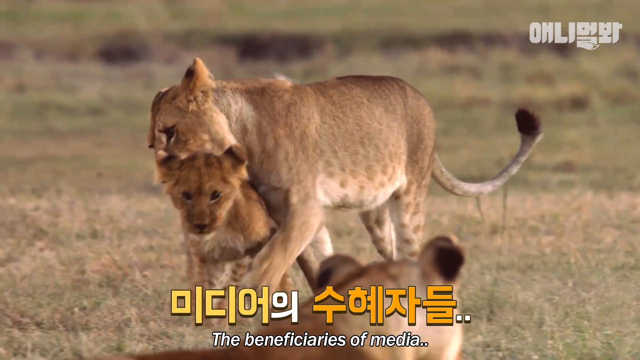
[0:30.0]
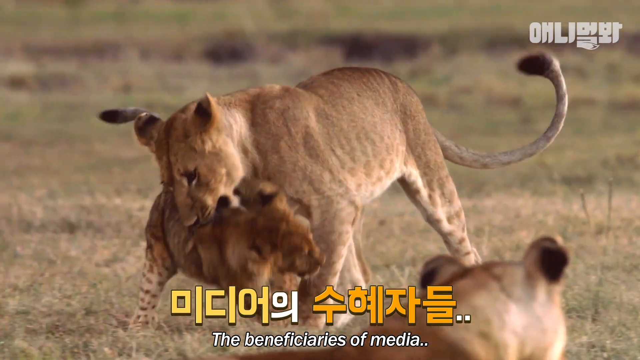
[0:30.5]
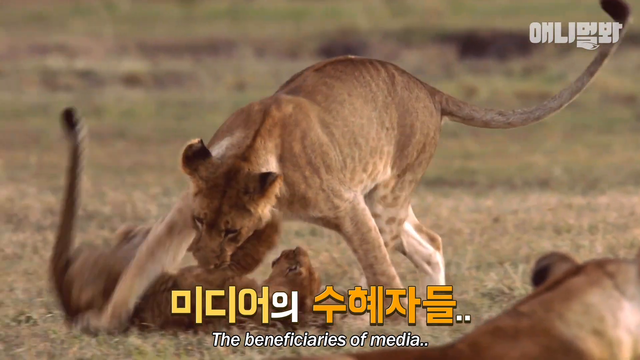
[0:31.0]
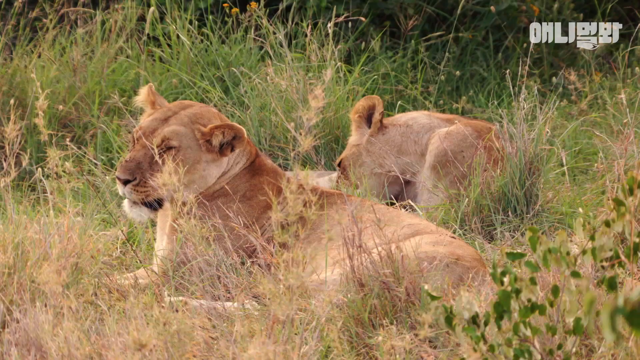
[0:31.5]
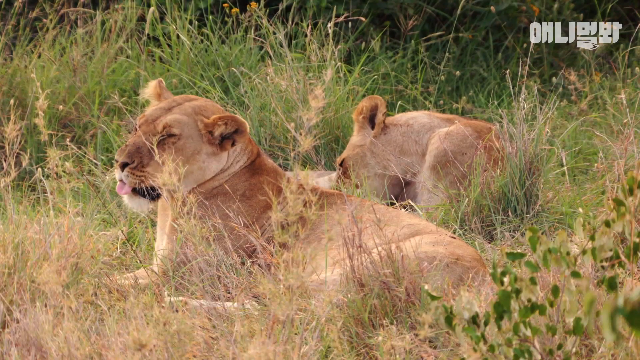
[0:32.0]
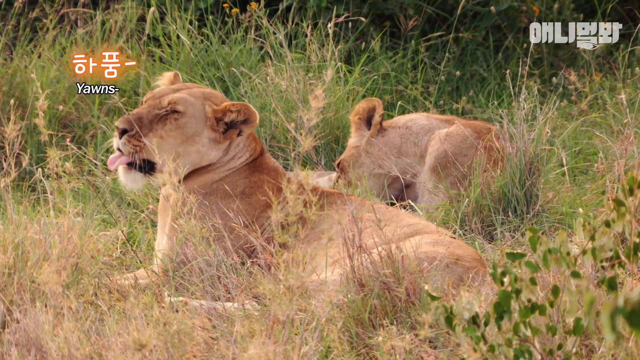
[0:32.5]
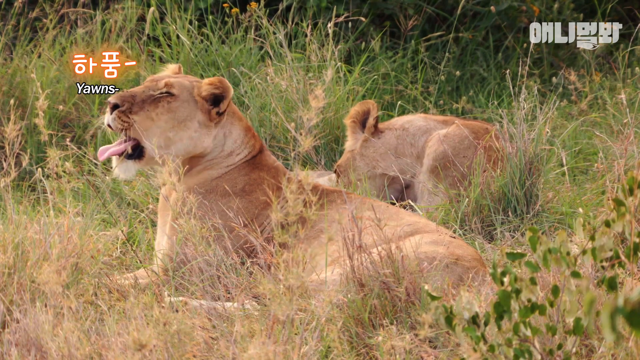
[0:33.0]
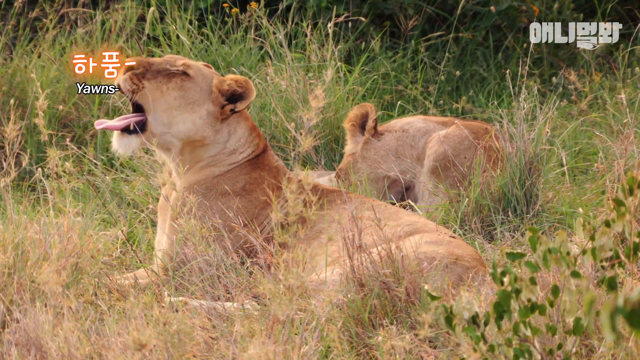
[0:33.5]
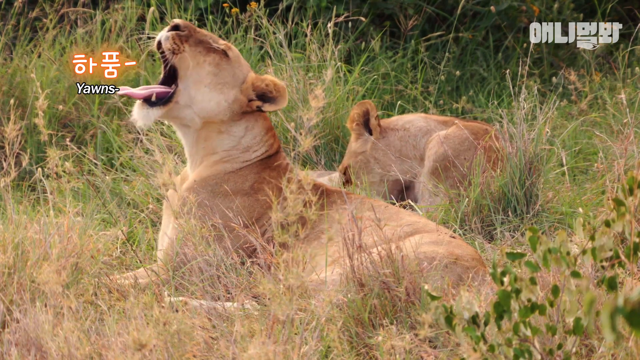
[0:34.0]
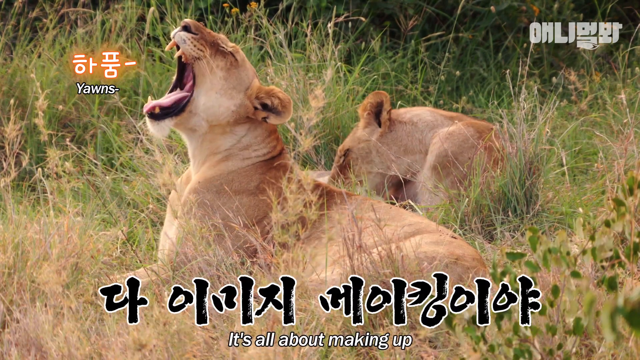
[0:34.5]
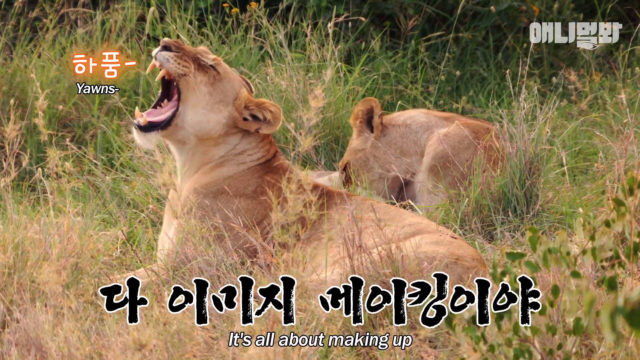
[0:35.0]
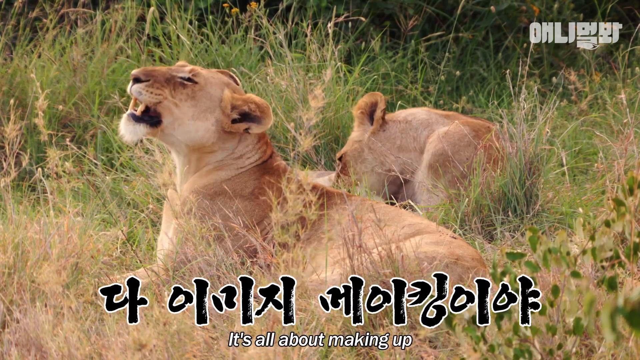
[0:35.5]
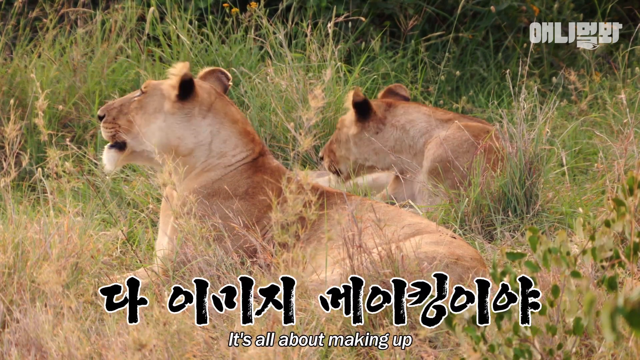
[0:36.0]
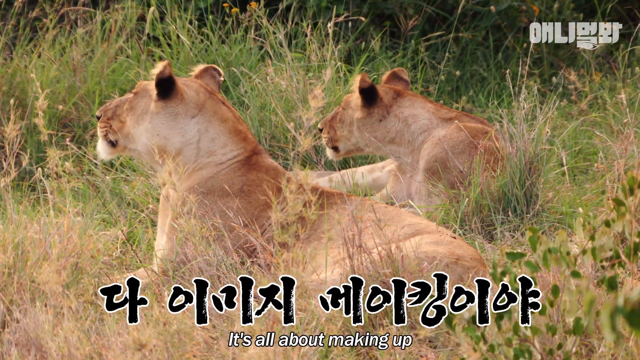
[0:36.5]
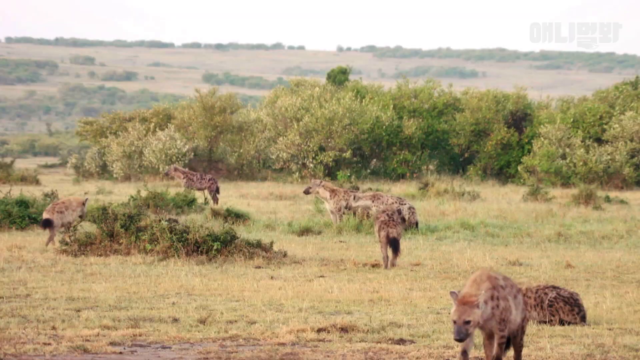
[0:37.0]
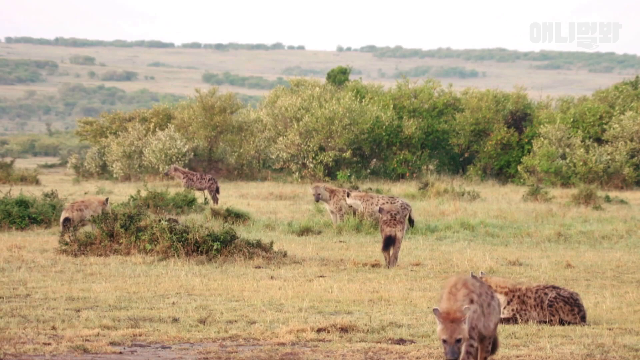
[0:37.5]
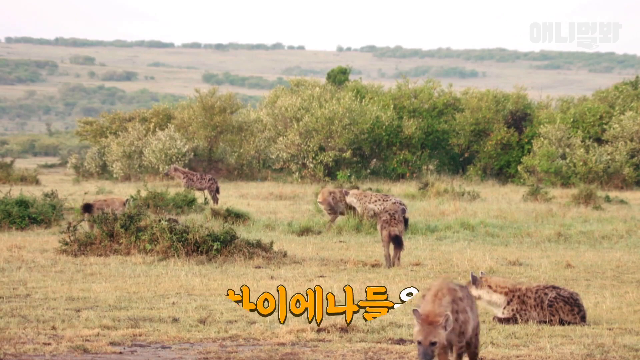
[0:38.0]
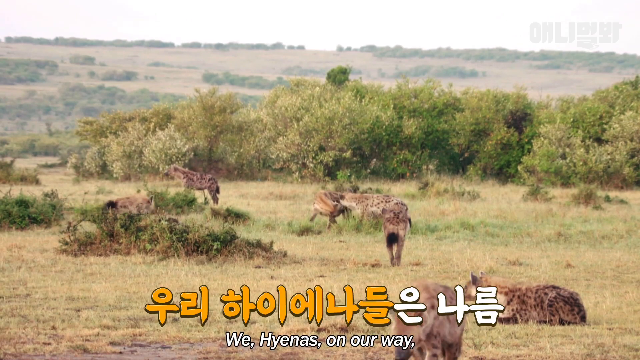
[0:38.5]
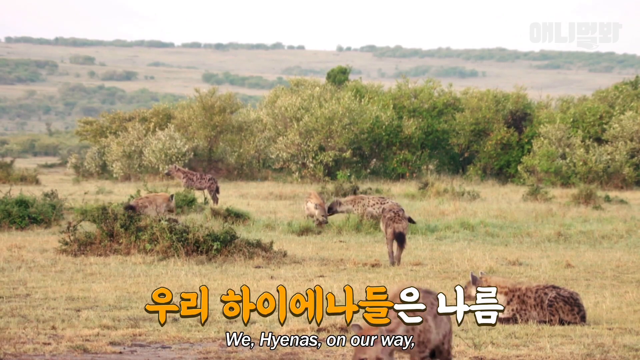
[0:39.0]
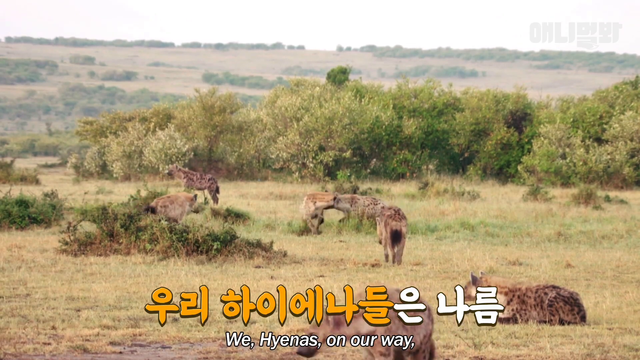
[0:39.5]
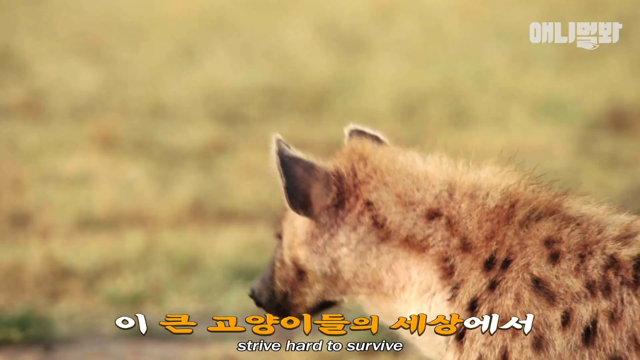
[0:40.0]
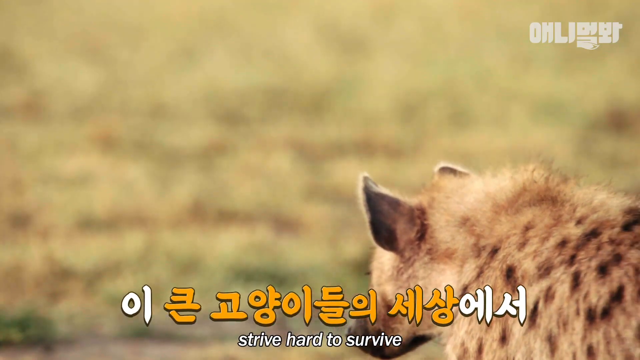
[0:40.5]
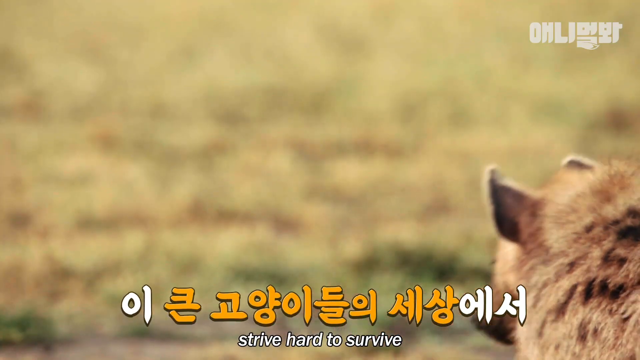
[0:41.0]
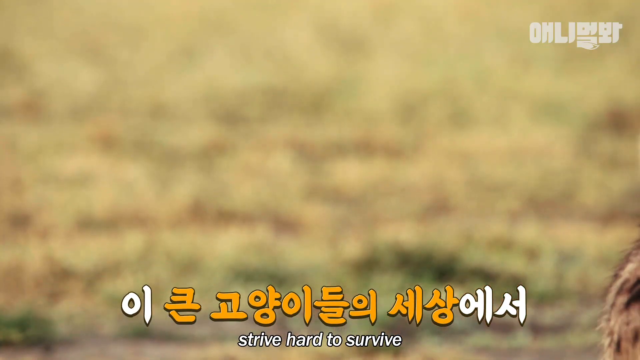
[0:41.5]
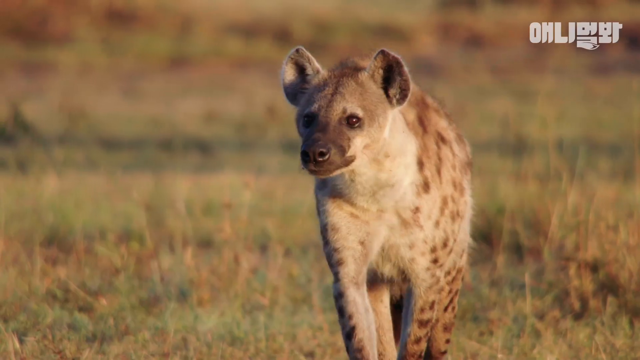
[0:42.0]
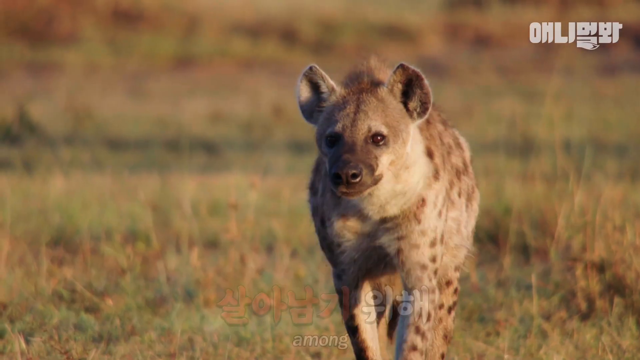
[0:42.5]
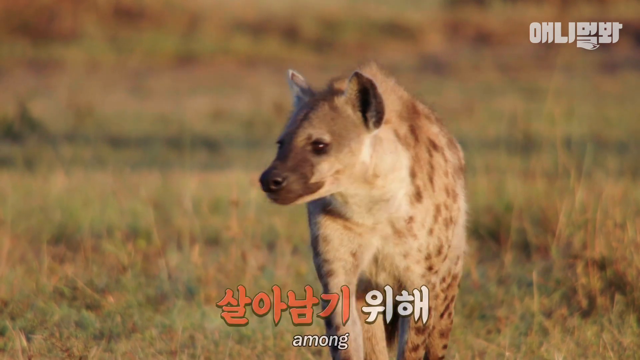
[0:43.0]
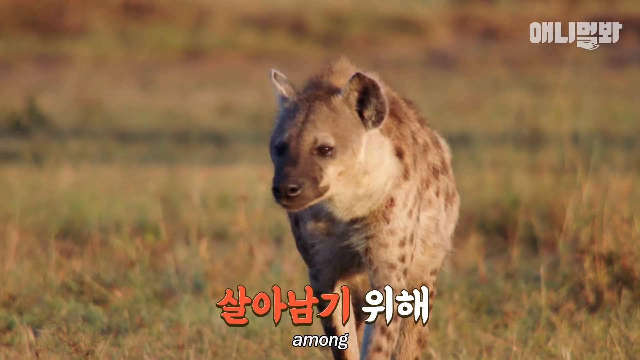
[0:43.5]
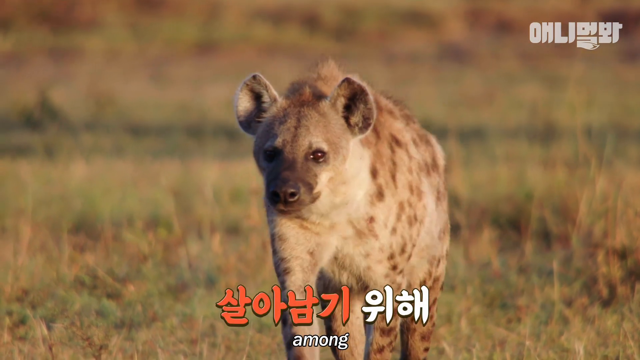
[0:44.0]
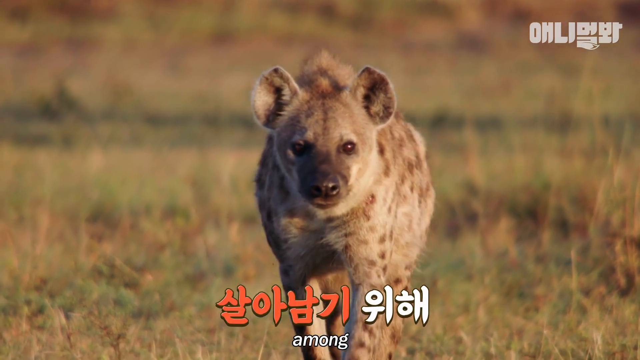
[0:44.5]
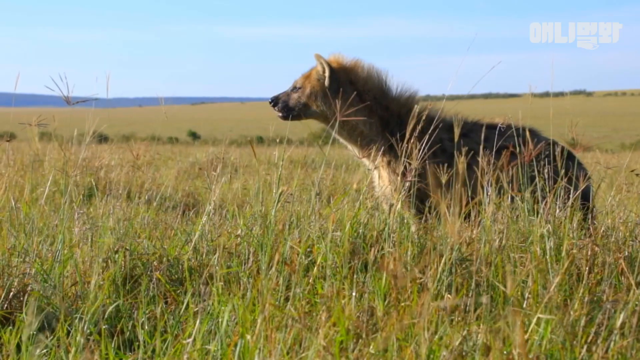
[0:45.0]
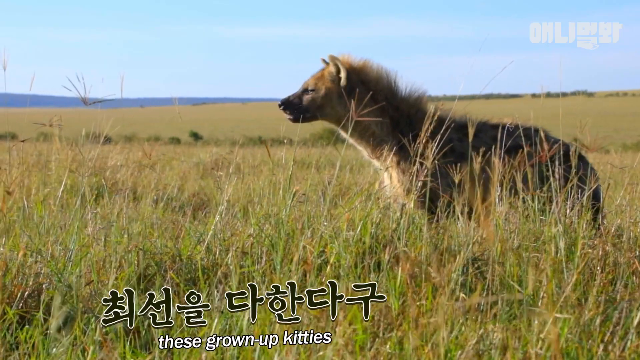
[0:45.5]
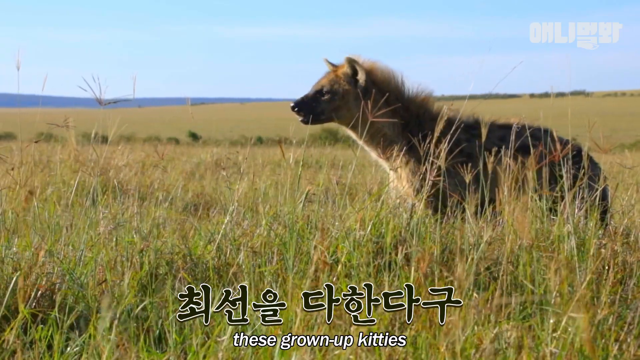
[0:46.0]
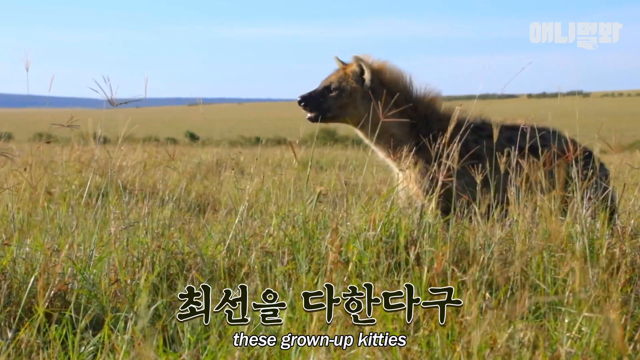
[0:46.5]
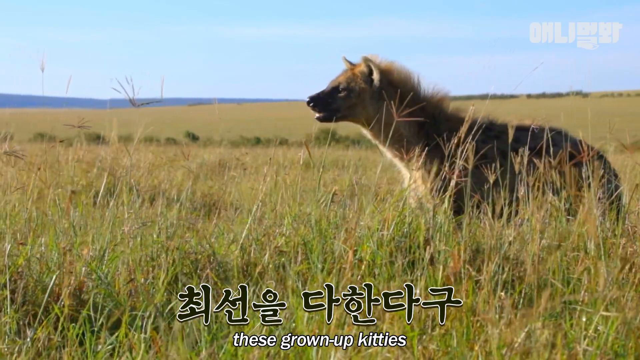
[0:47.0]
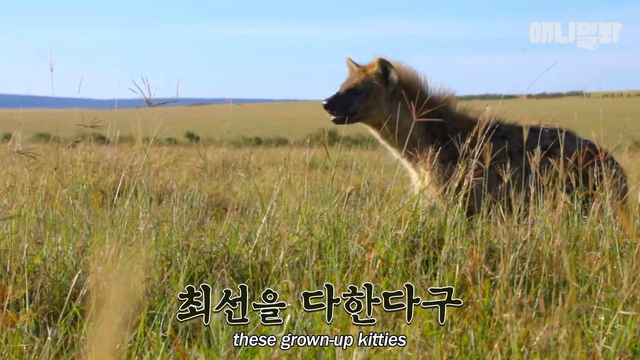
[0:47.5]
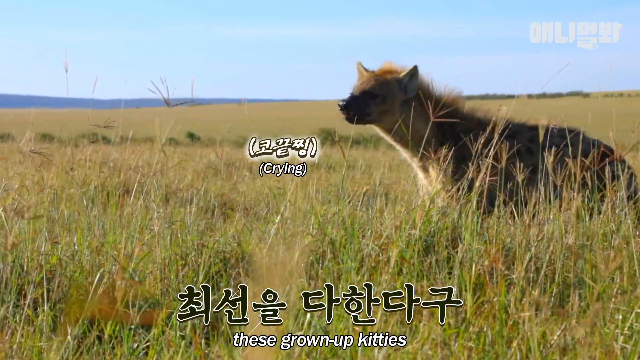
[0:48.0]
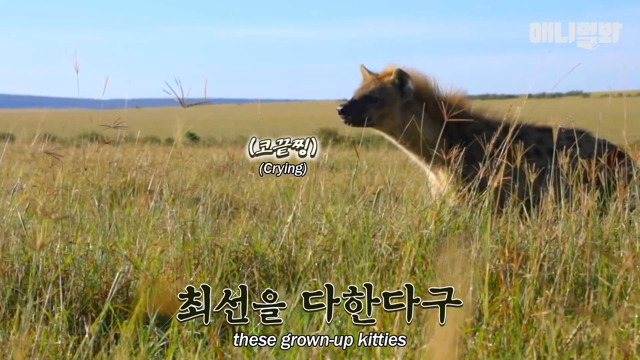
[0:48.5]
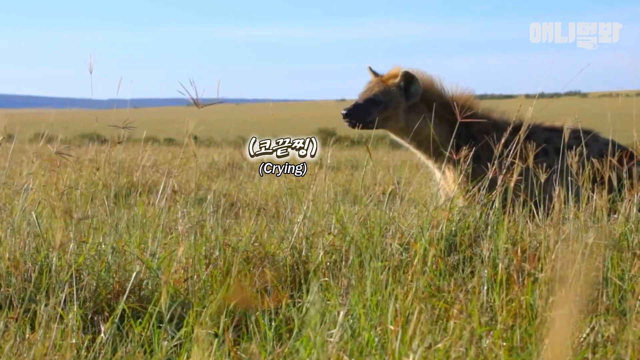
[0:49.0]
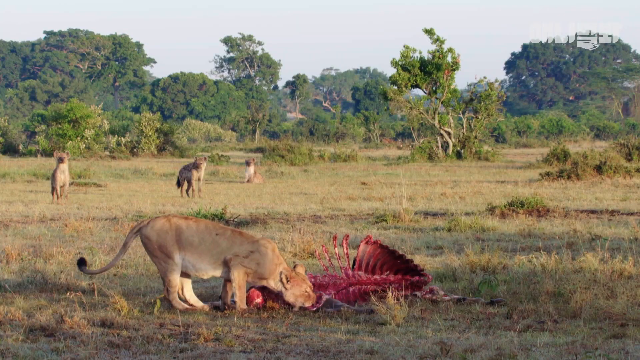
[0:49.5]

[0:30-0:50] Hyenas and lions are shown again, mostly adult lions: males with manes and females without. The hyenas look the same as before and appear to be idly observing the lions. The captions seem to indicate some kind of jealousy, with the hyenas envying the lions' status and dominance, and the hyenas expressing that they live a hard life and need to work hard.